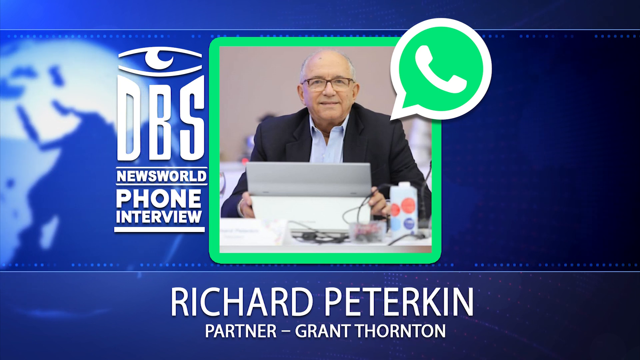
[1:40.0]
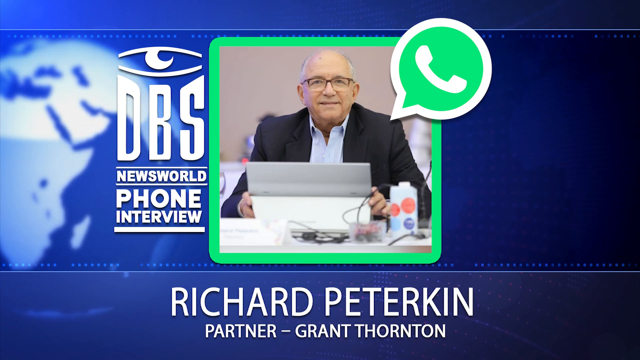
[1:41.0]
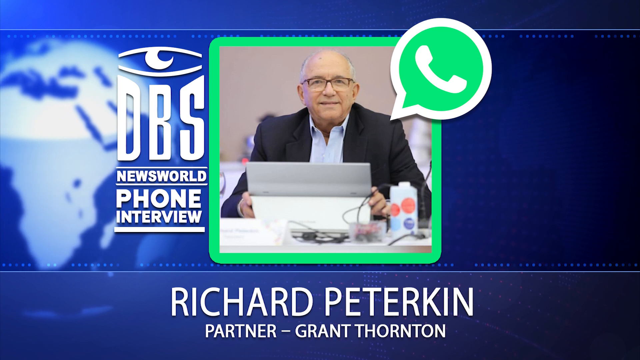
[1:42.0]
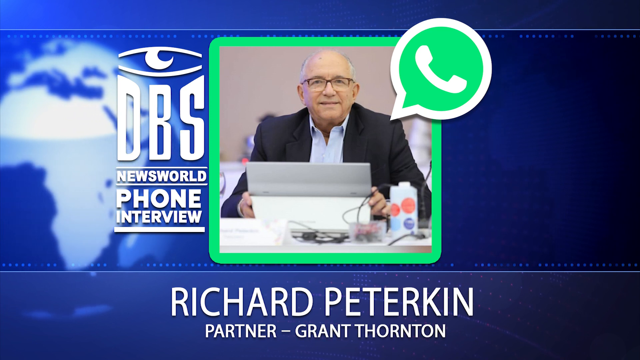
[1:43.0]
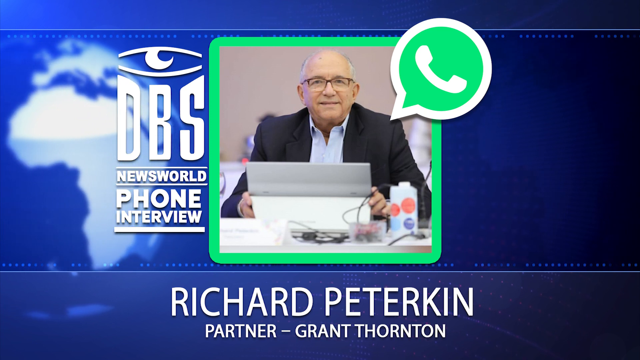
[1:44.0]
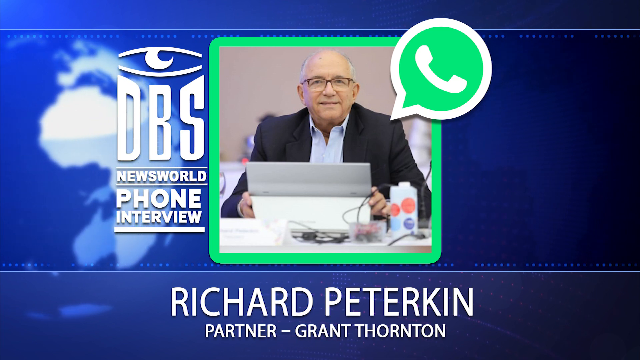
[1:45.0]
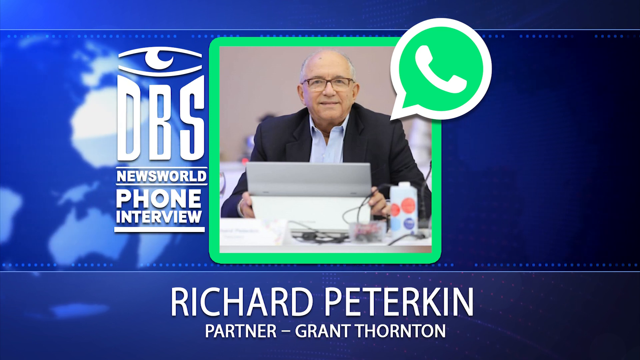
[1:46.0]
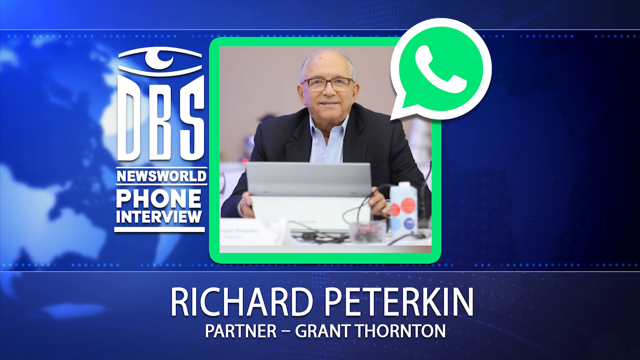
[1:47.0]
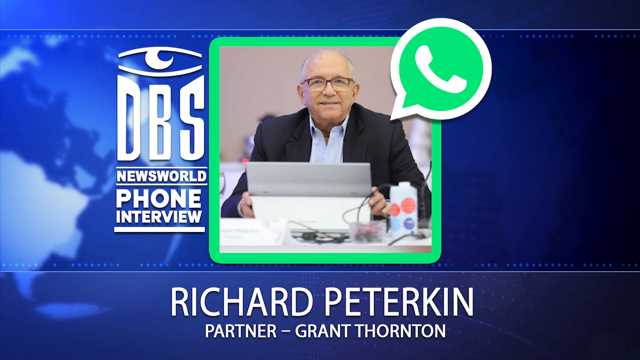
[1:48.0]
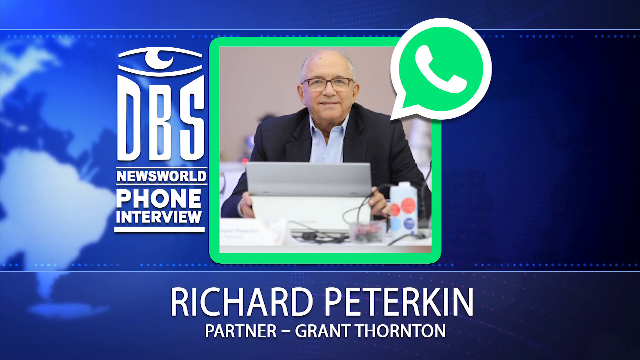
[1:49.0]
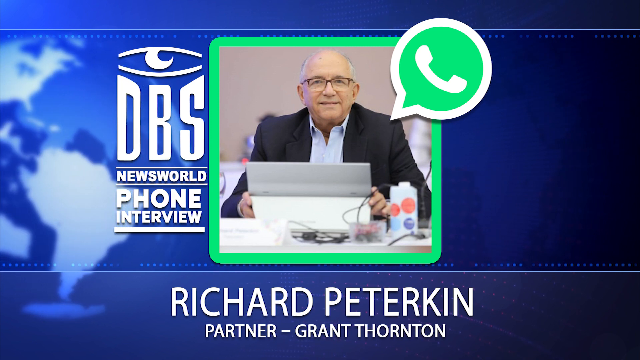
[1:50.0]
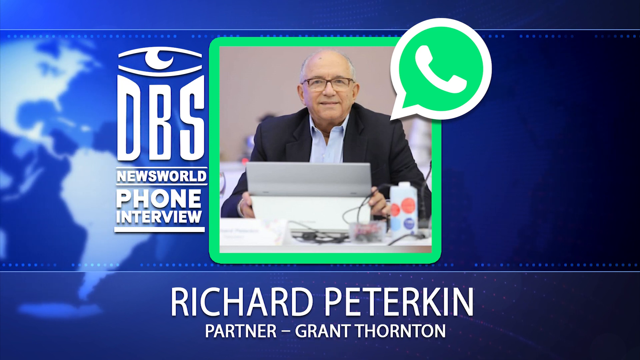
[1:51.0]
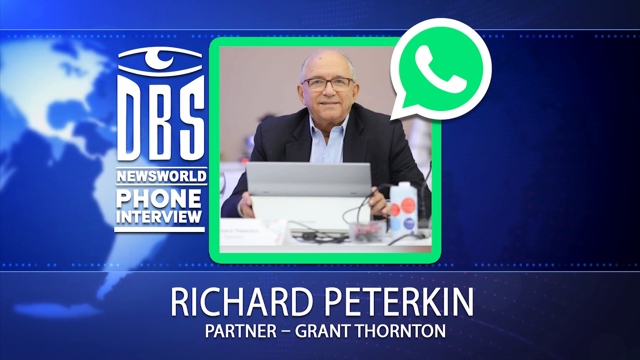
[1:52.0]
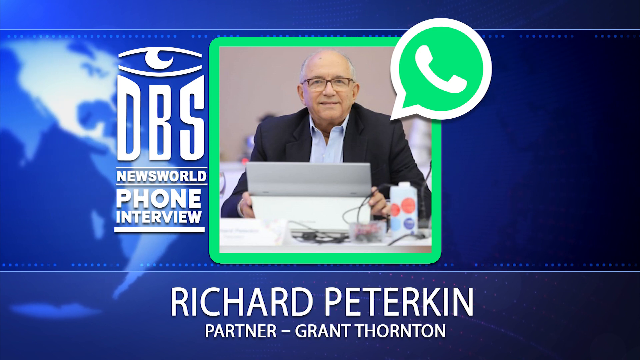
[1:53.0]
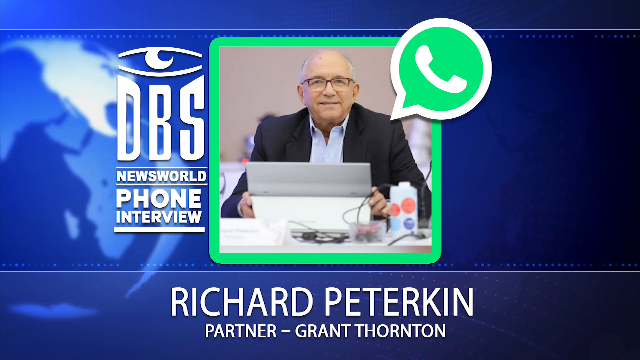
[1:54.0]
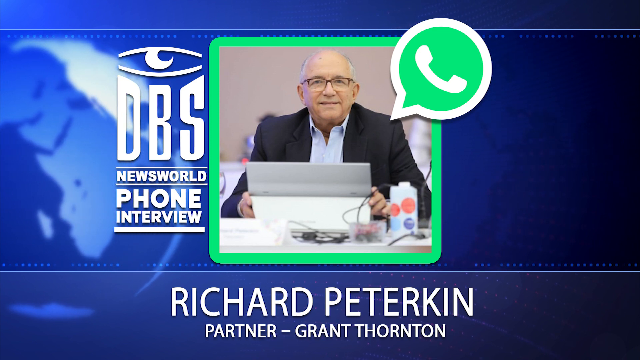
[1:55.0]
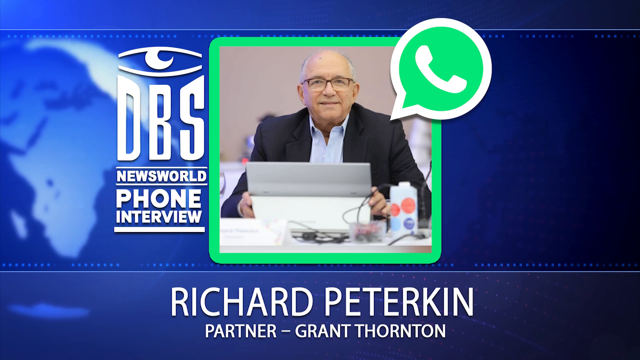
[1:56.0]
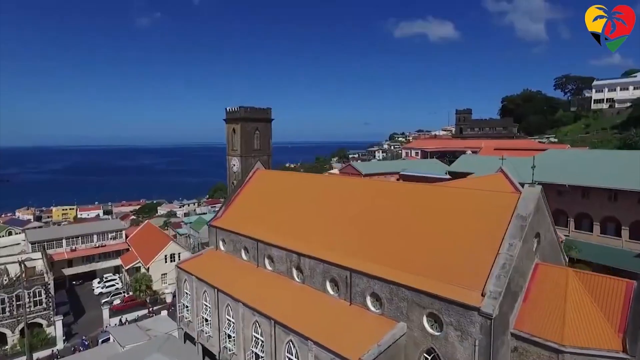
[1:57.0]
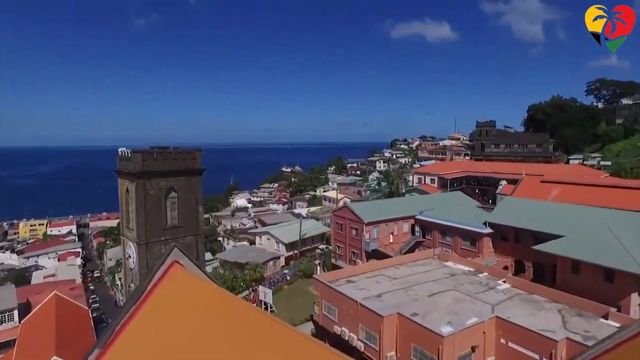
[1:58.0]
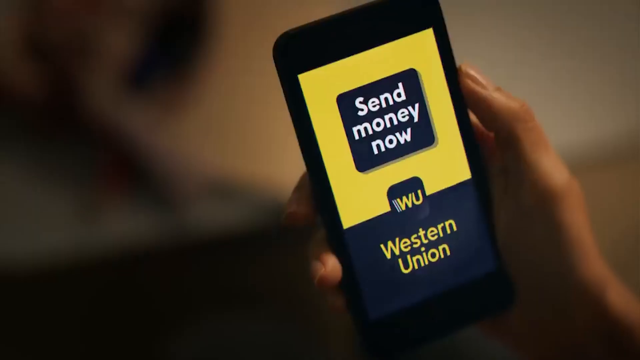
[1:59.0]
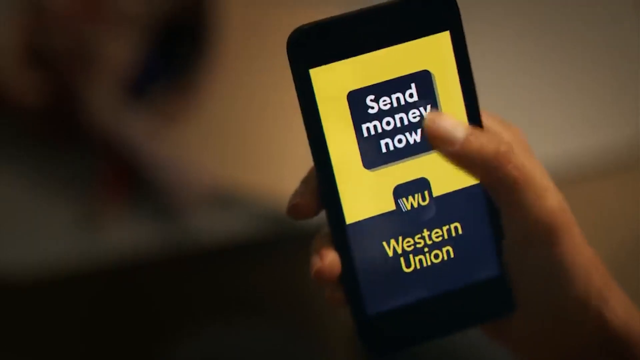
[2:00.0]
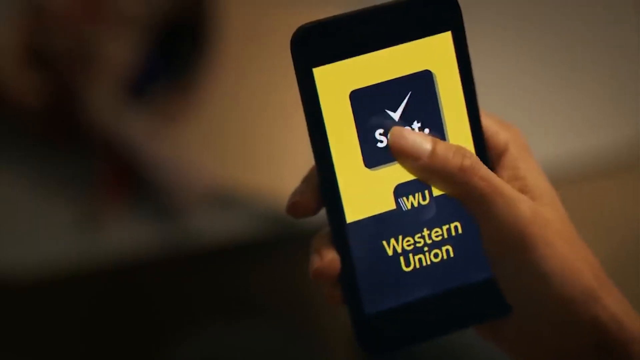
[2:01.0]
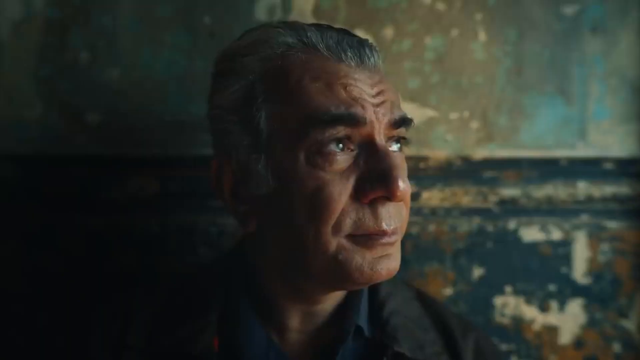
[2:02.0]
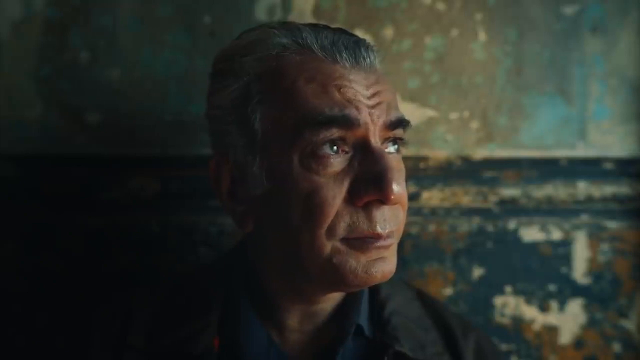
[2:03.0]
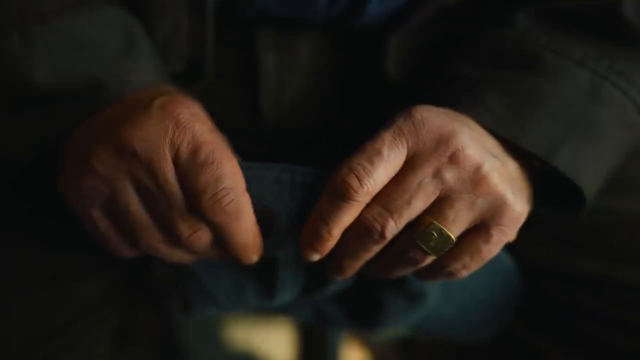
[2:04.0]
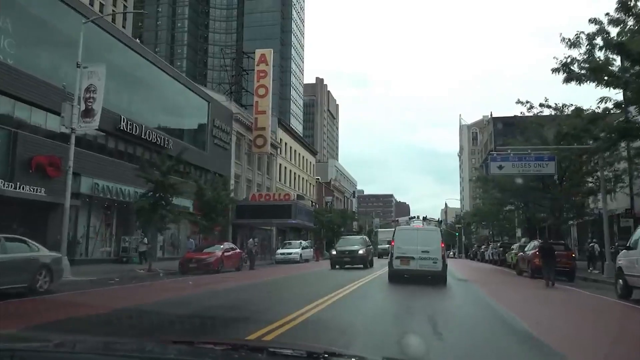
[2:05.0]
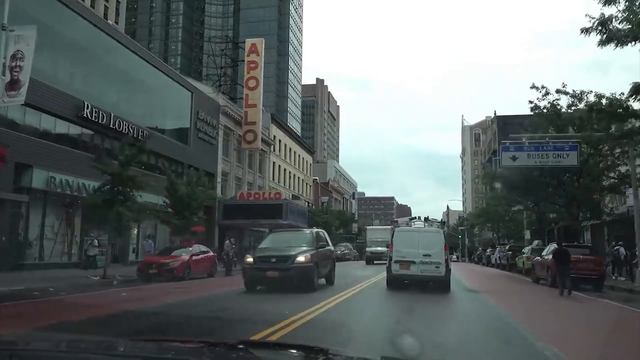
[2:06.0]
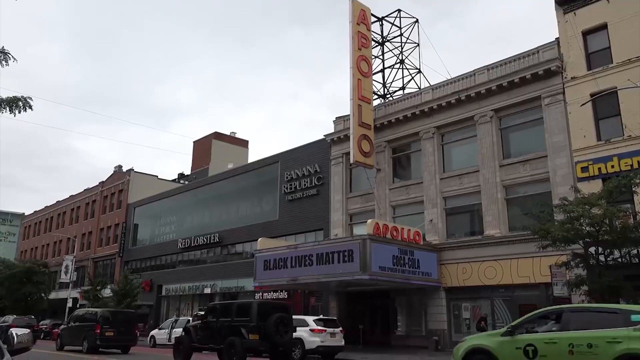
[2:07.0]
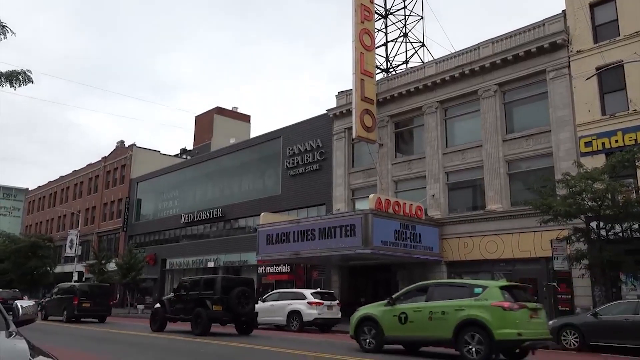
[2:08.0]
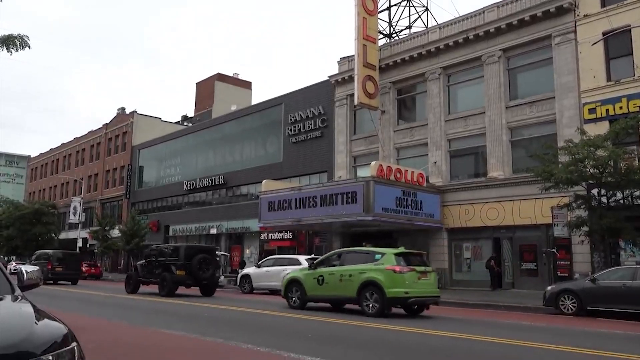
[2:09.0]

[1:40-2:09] The name Richard Peterkin appears, with "partner Grant Thornton" in white on the top part, along with "DPS News World phone interview". Afterward, text reads "send money now Western Union", possibly a commercial. The scene then shifts to New York, where the Apollo Theater in Harlem is visible. The footage looks like it is recorded from a car behind a white van. A rectangular sign on the right side has a blue top section reading "bus lane" and a white section beneath reading "buses only" in black-blue, with an arrow pointing down. Next to the Apollo Theater is a Red Lobster.